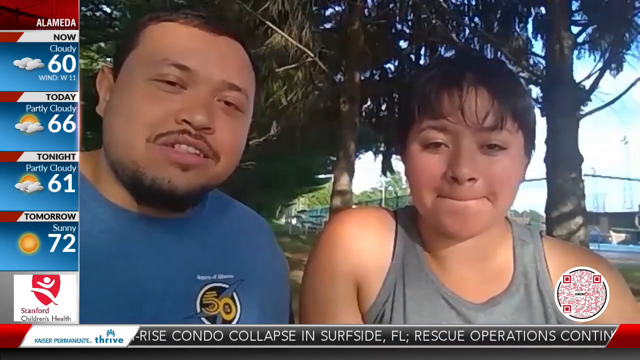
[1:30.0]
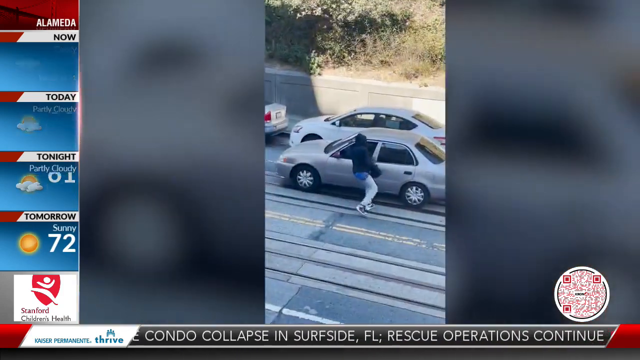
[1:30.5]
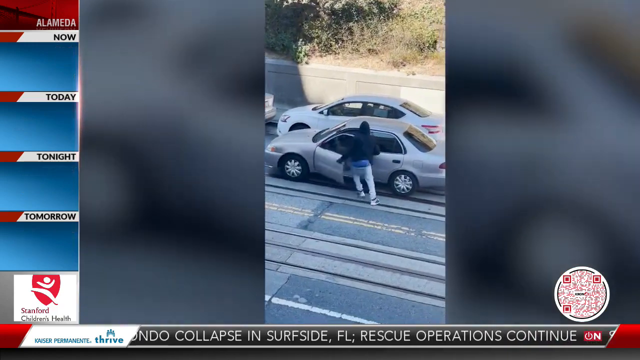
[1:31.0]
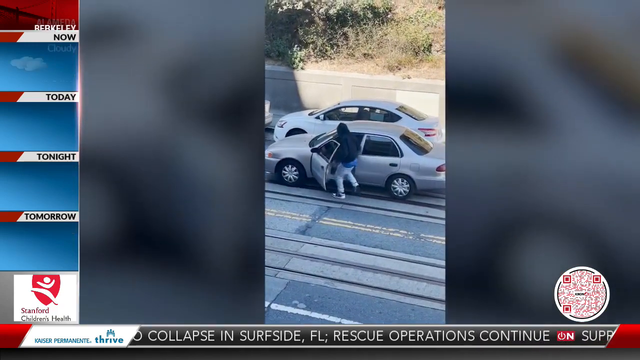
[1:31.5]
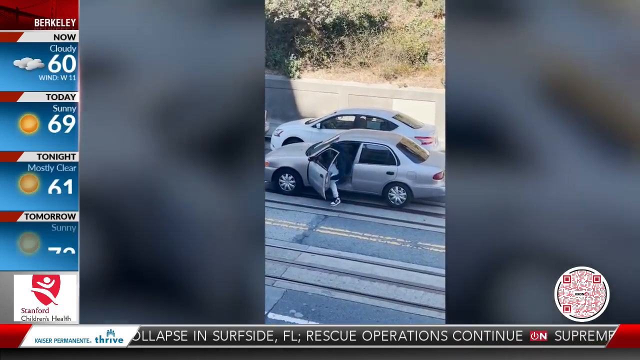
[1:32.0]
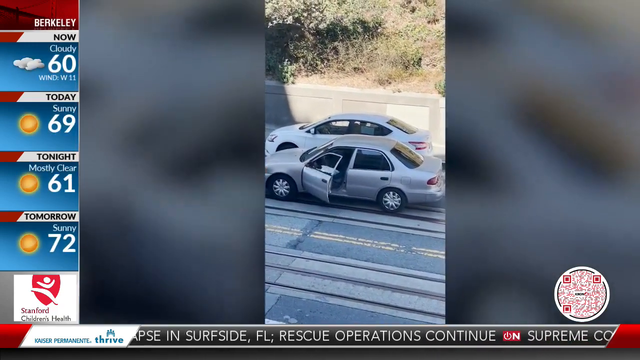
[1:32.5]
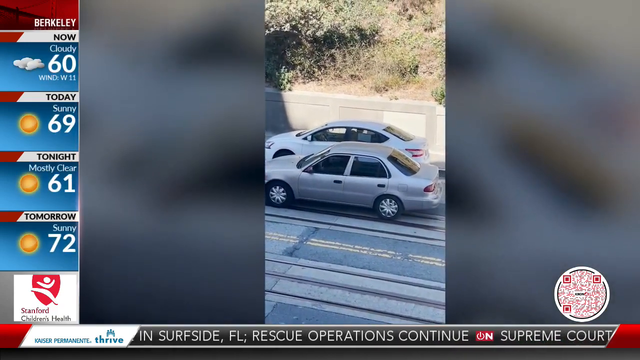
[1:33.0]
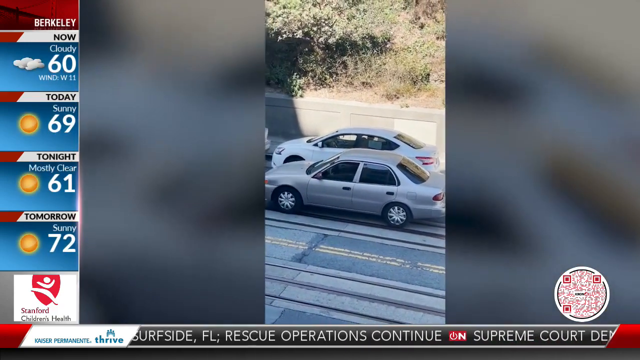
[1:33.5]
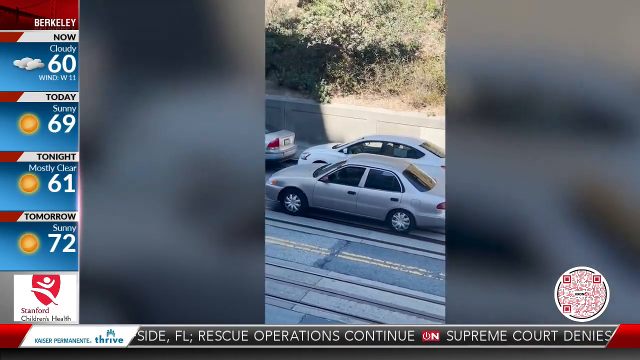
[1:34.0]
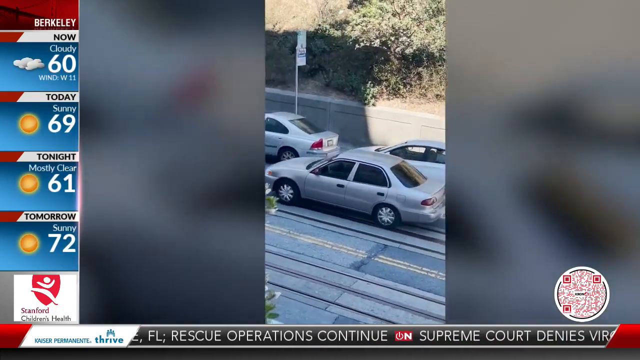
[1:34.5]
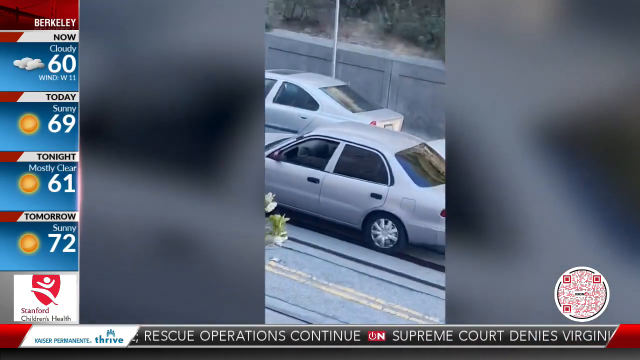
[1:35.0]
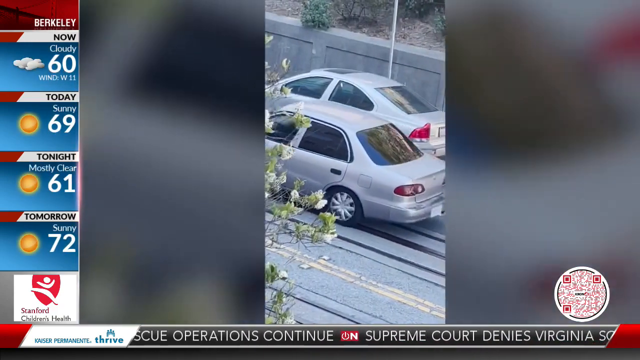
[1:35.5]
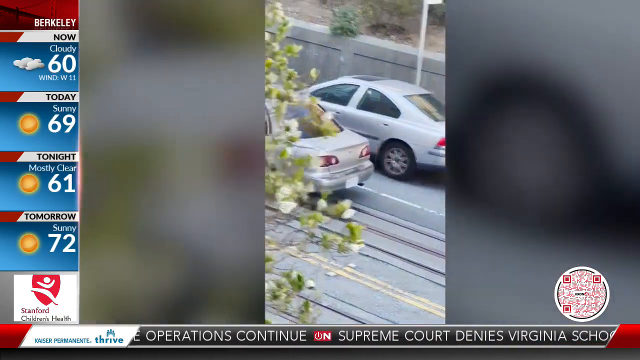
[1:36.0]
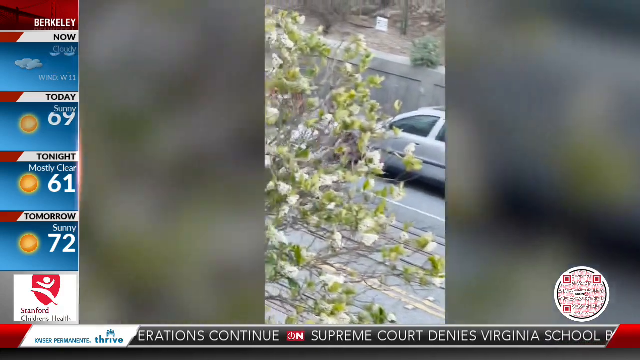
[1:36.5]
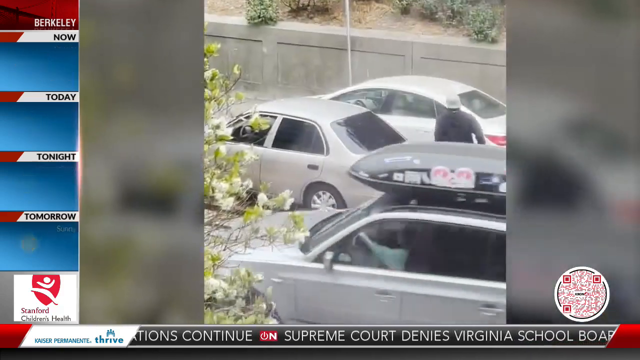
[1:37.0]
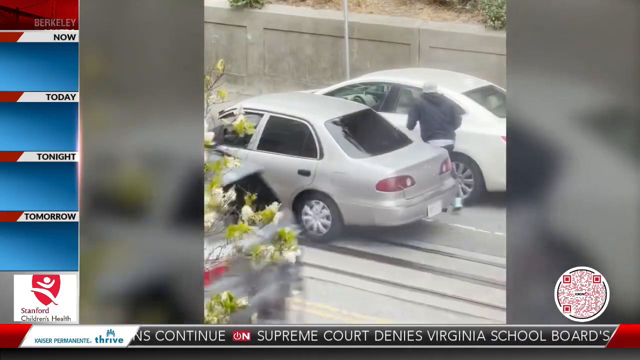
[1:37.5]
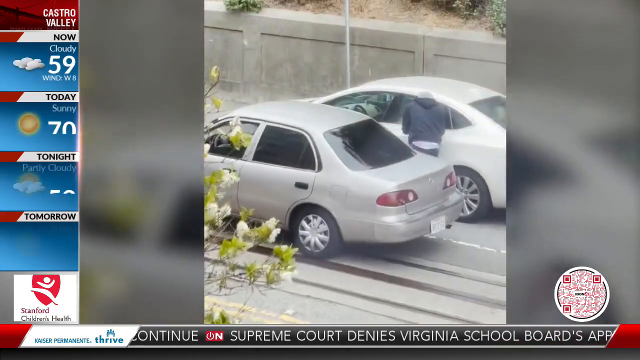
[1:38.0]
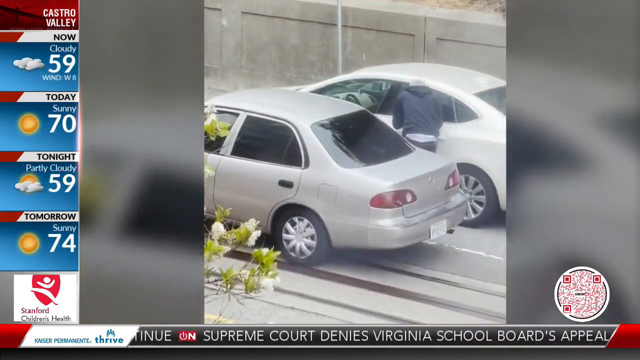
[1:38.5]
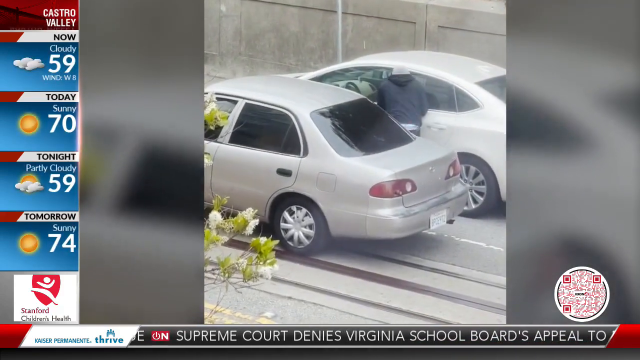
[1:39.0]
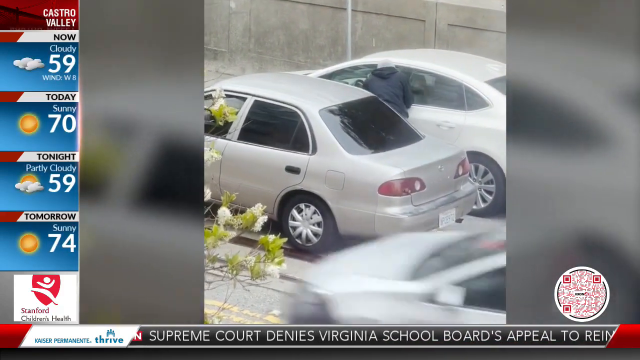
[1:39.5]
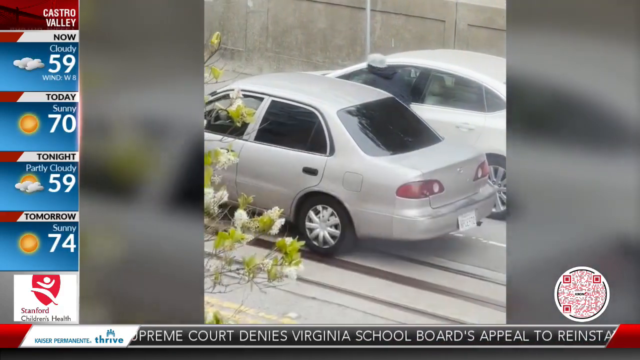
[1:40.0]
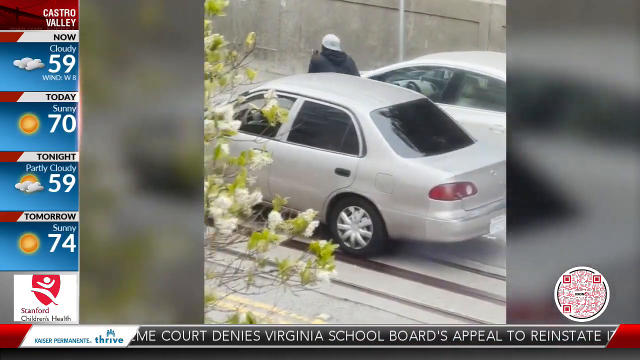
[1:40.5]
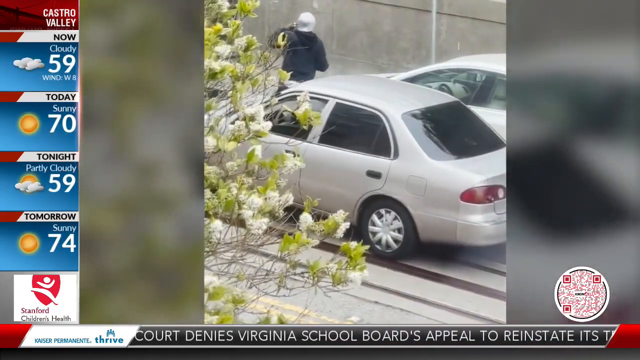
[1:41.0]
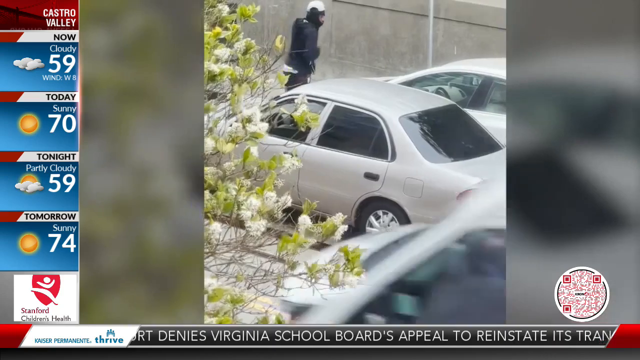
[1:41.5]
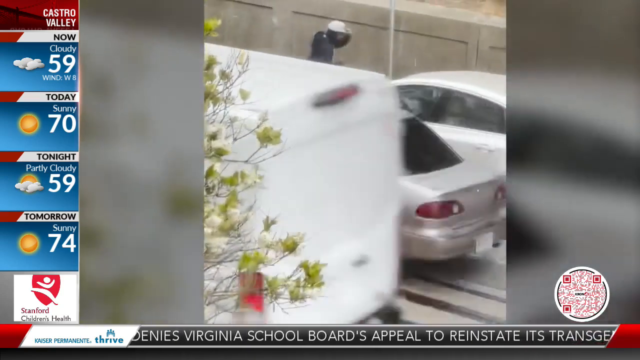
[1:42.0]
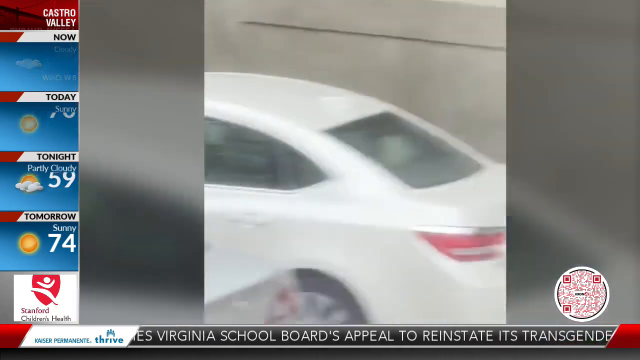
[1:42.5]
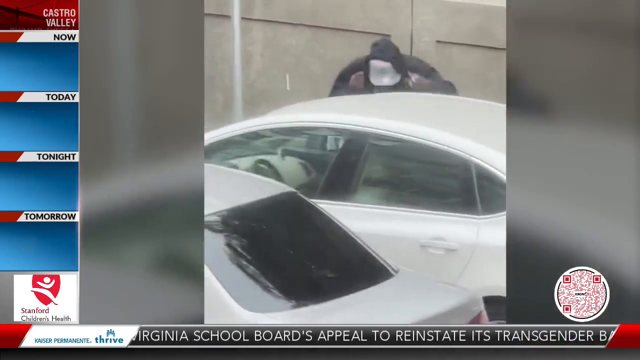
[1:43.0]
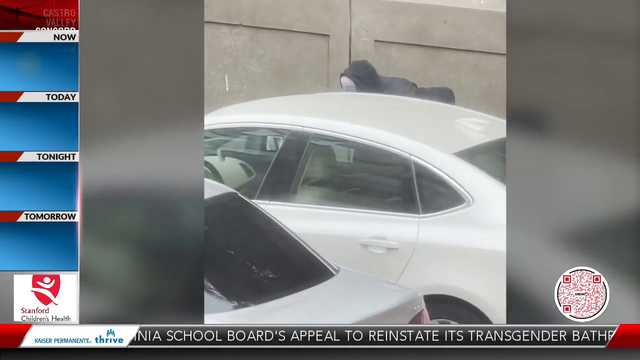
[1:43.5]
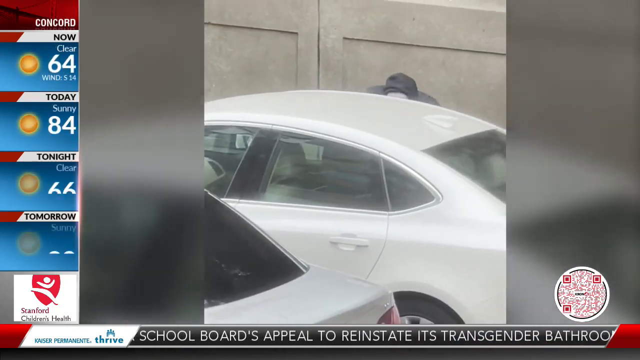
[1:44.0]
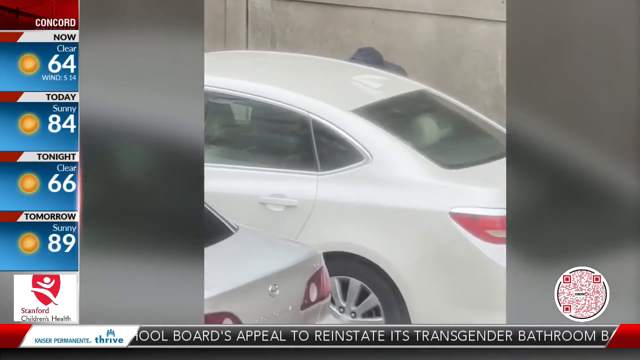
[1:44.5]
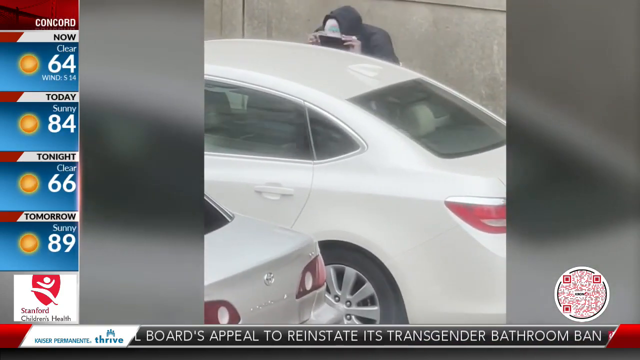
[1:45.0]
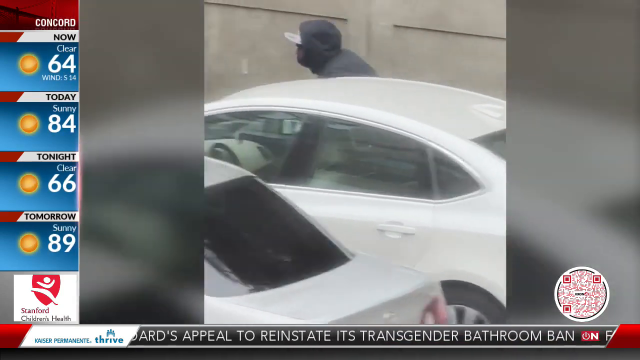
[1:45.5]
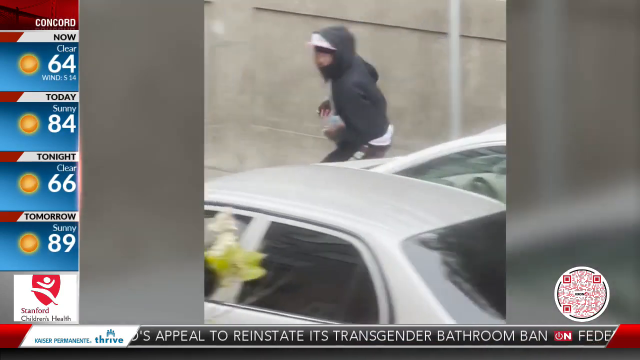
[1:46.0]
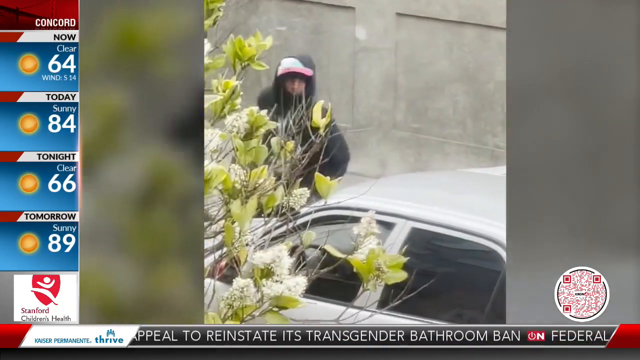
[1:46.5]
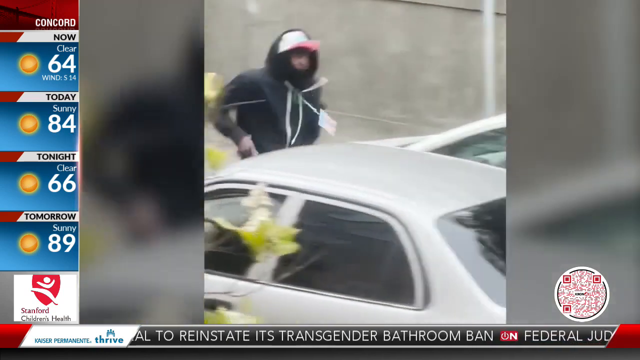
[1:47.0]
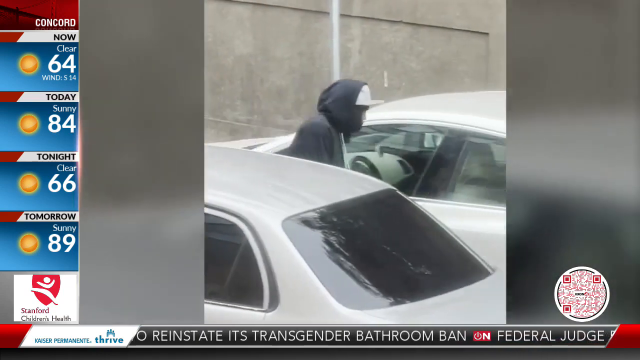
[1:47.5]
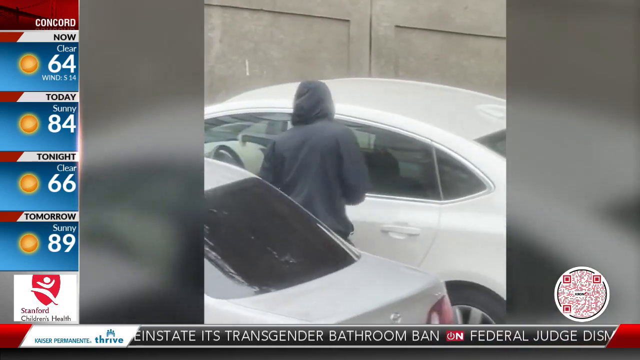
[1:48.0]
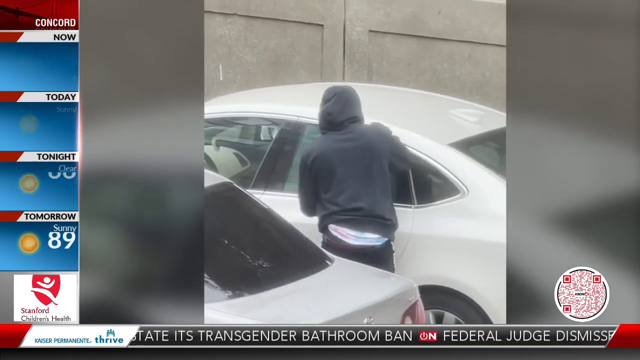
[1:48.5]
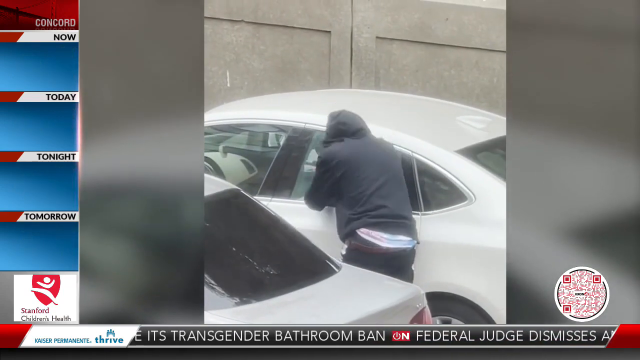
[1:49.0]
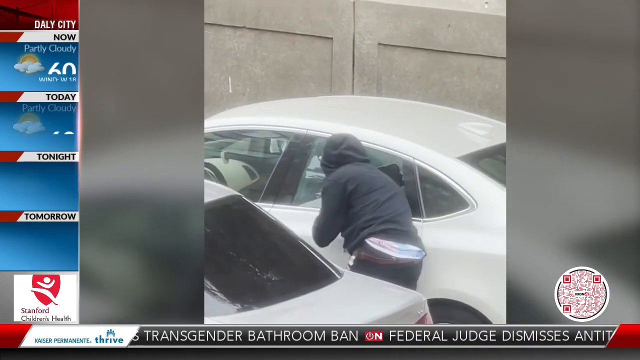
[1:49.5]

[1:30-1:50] A wider shot shows the same thief getting into the car and driving off. A new shot follows of what appears to be a different man stealing a different car. He first looks into the back window on the driver's side, runs around to the opposite side and looks in, then runs back to the driver's side back window and appears to smash it with his arm. Because the camera is behind him, it cannot be seen whether he holds anything in his hand. He wears a dark black or blue hoodie with the hood pulled up. On the left-hand side, weather forecasts are shown for Berkeley, Castro Valley and Concord. The news station's QR code remains in the bottom right-hand corner.